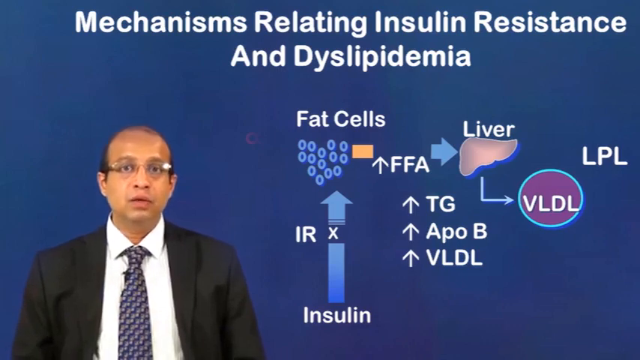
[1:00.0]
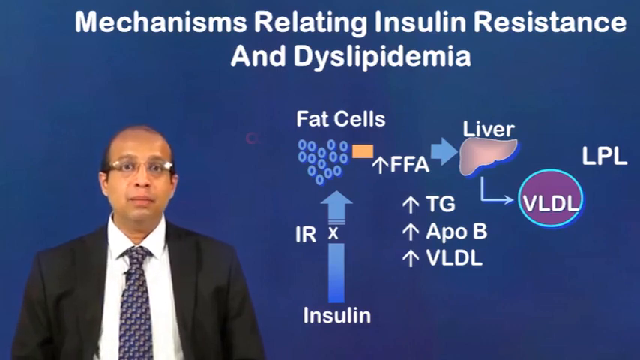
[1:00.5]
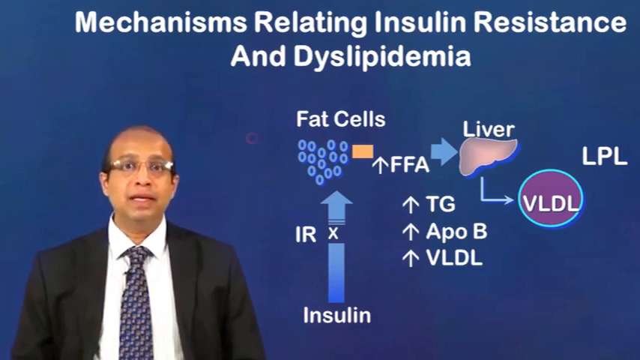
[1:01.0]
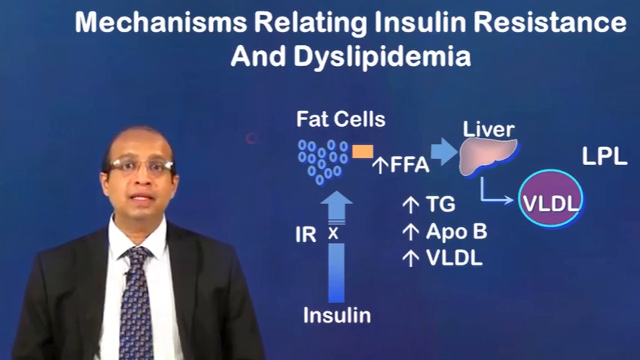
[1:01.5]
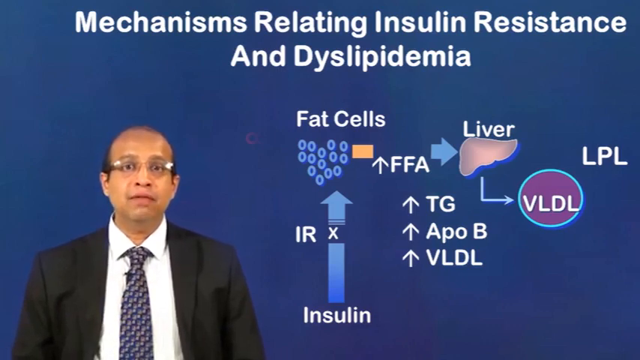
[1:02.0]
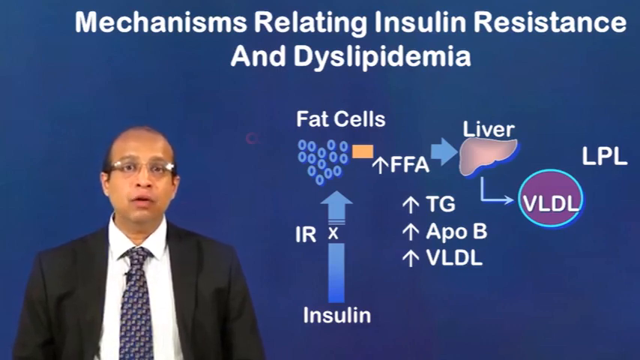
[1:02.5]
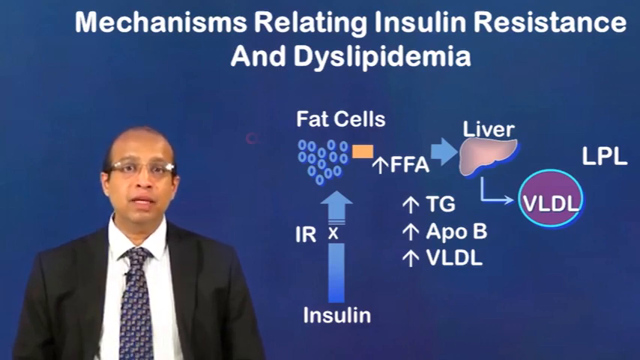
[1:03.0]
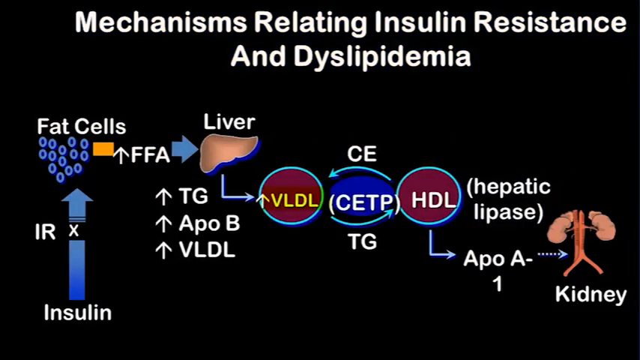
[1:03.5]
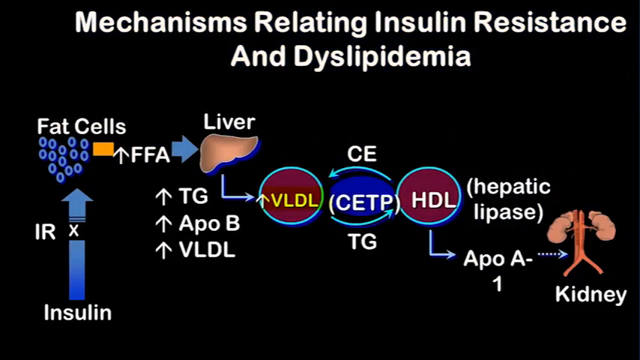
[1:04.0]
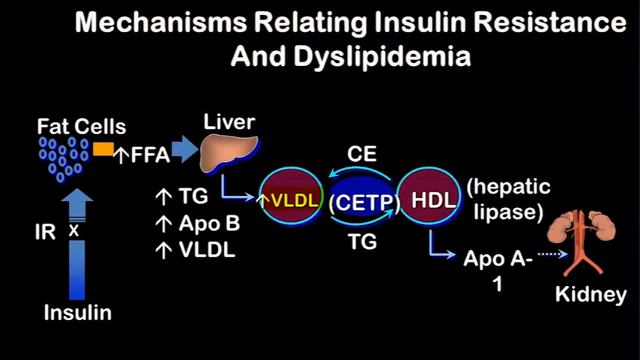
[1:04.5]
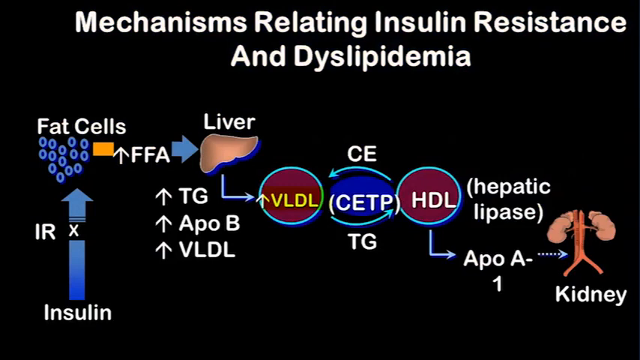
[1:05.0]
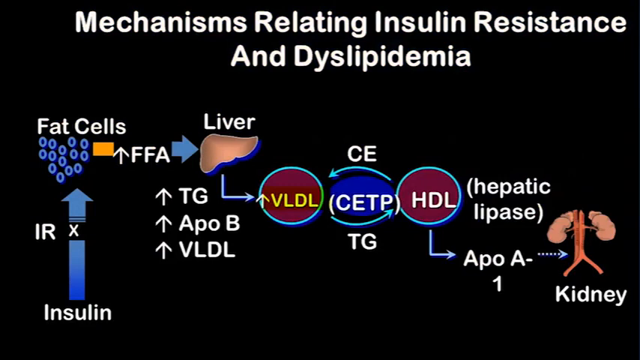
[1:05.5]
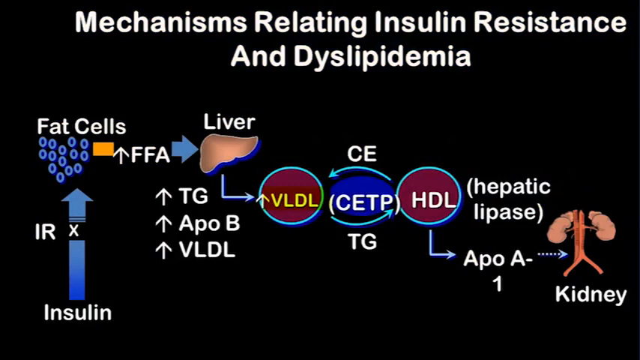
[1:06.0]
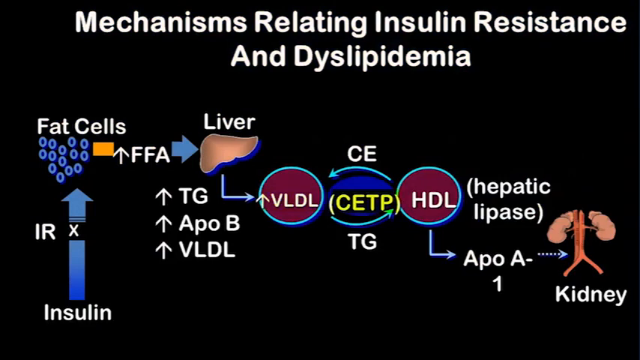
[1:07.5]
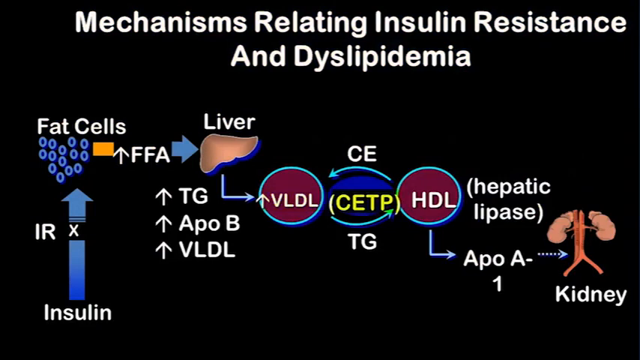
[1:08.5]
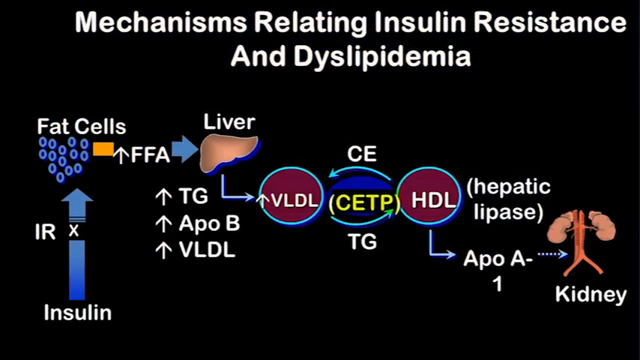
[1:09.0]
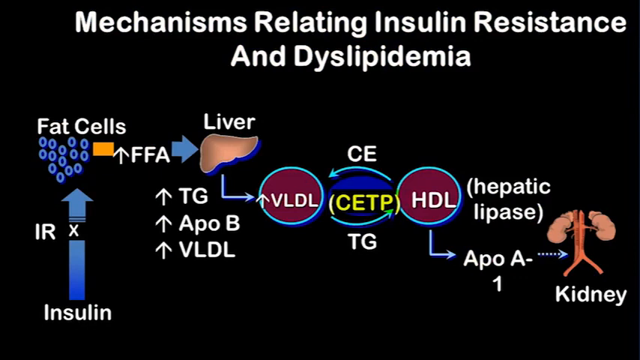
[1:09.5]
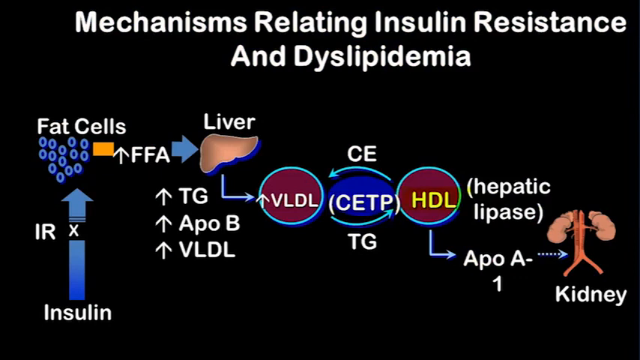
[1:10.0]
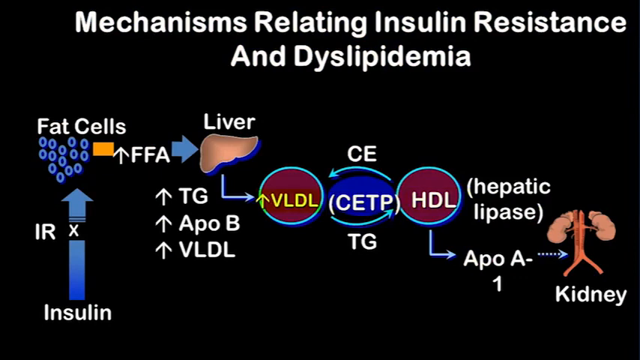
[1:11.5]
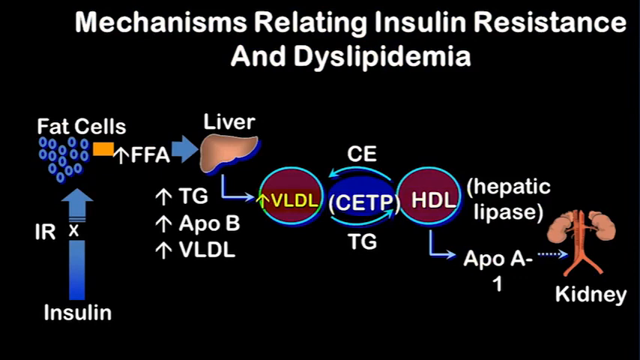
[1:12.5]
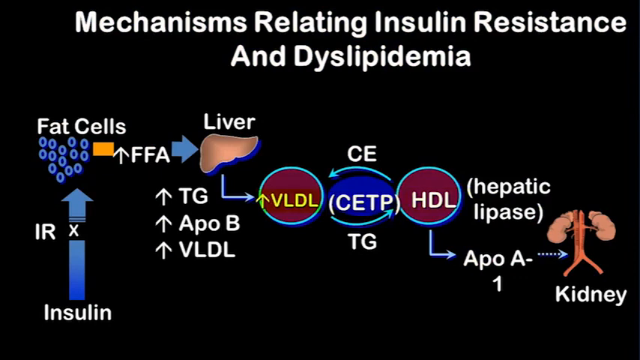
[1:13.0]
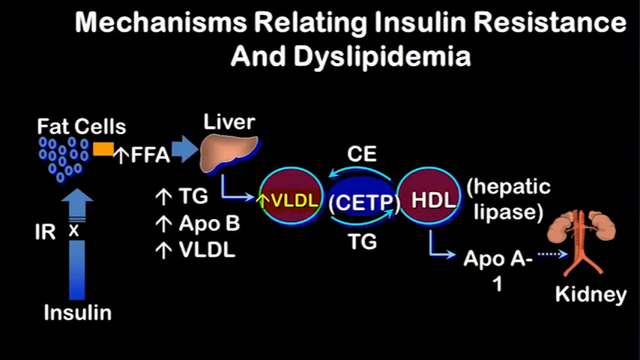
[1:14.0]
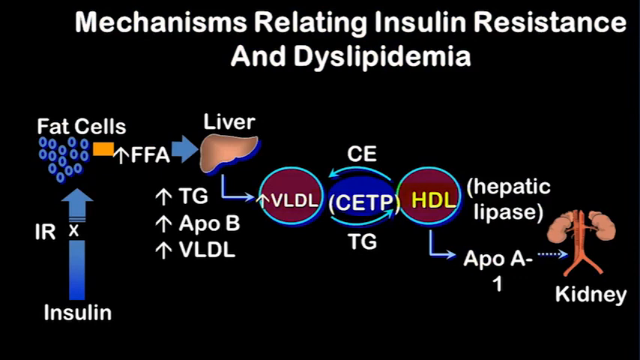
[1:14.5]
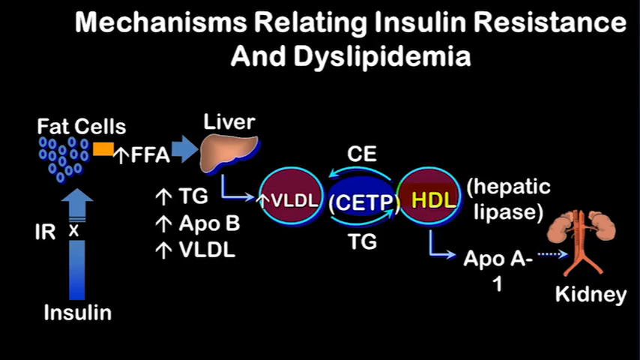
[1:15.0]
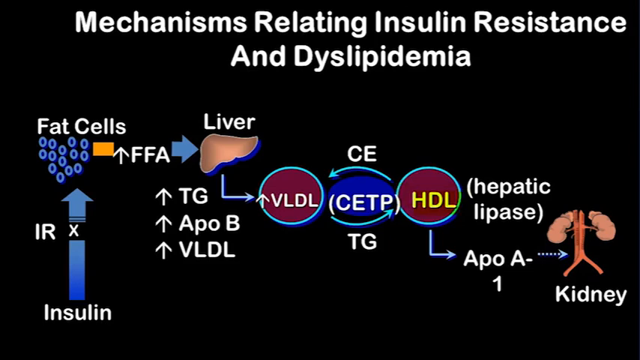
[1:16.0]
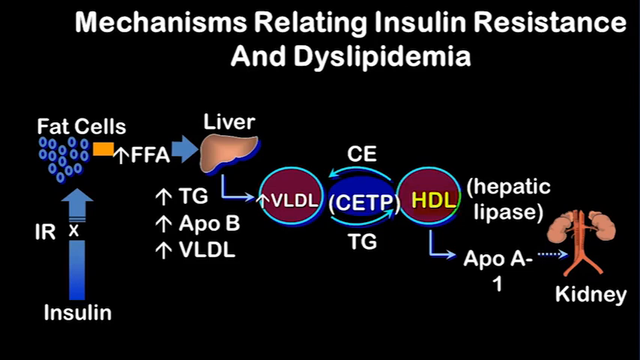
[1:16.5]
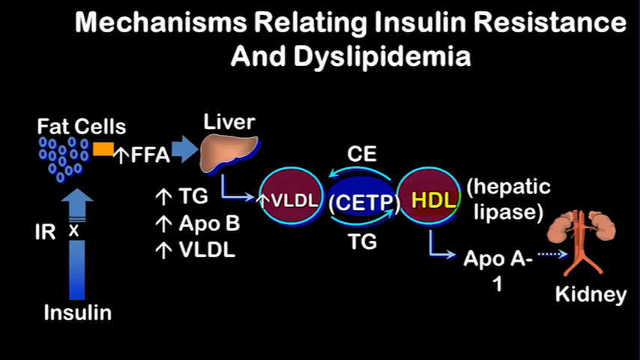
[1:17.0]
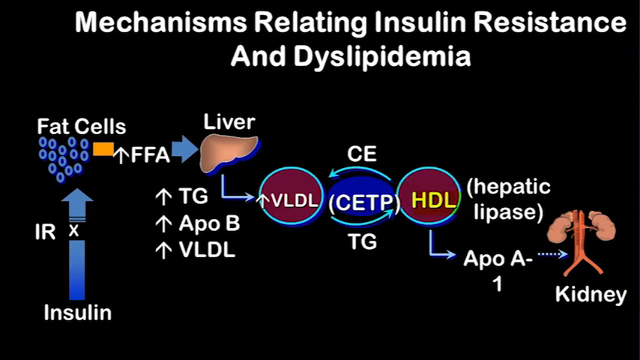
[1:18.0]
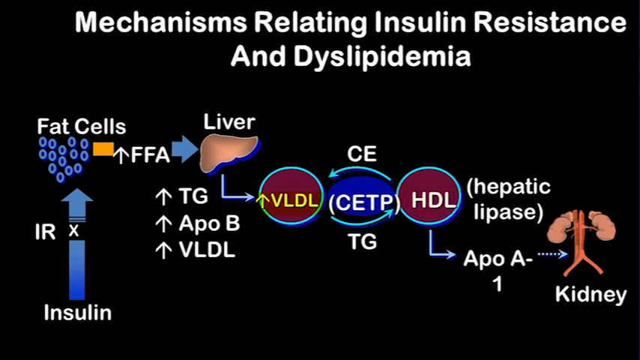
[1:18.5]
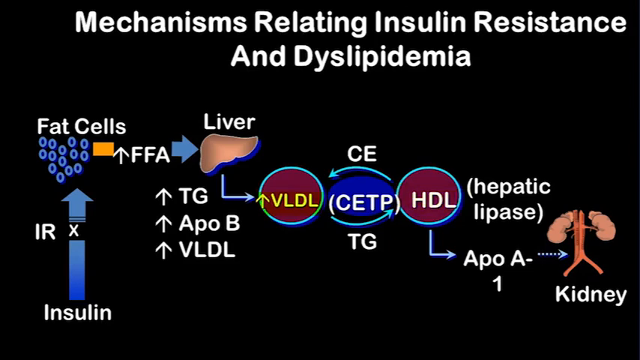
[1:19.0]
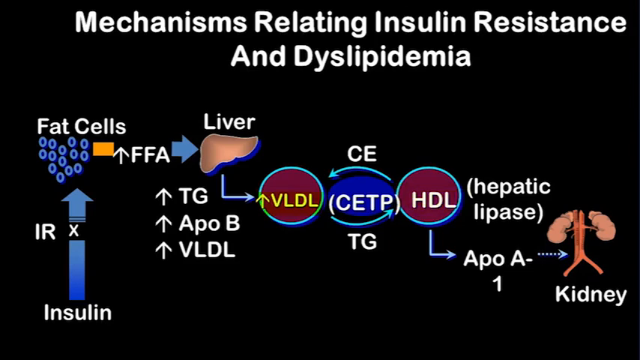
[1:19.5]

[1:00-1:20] Another transition brings a more detailed visual of the pathway. On the left-hand side, "insulin" is labeled with an arrow pointing to fat cells. More labels continue the chain: the fat cells lead into the liver, with other scientific terms, and toward the far right it says "peptic lipase," which then leads into the kidney. The pathway goes from insulin into the fat cells, then into the liver, and eventually into the kidneys.